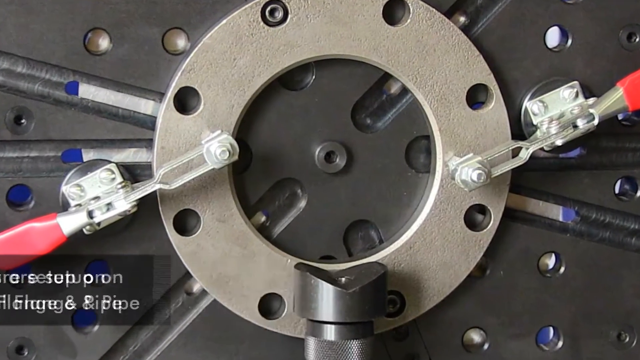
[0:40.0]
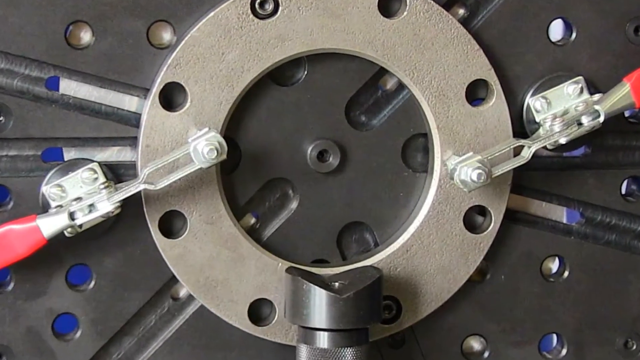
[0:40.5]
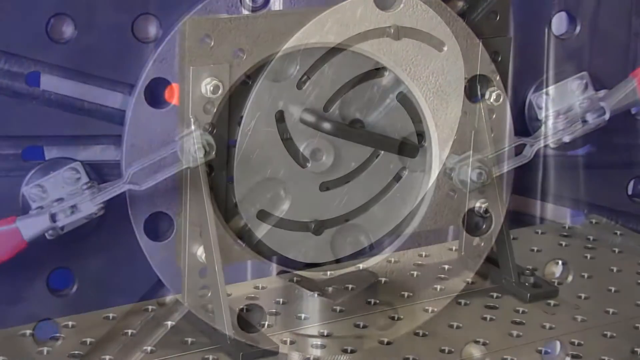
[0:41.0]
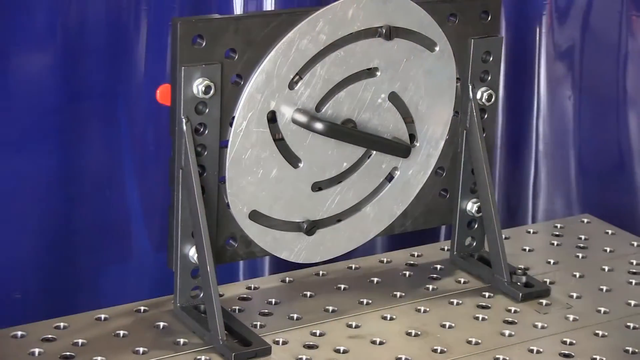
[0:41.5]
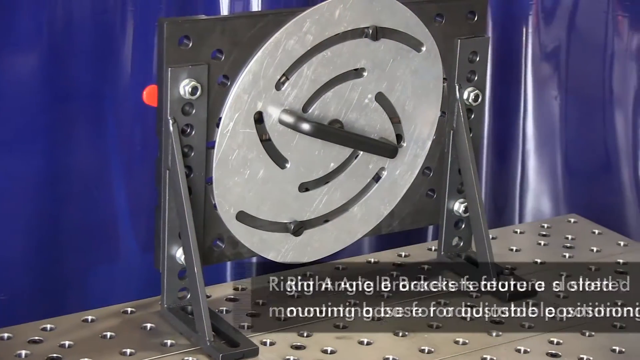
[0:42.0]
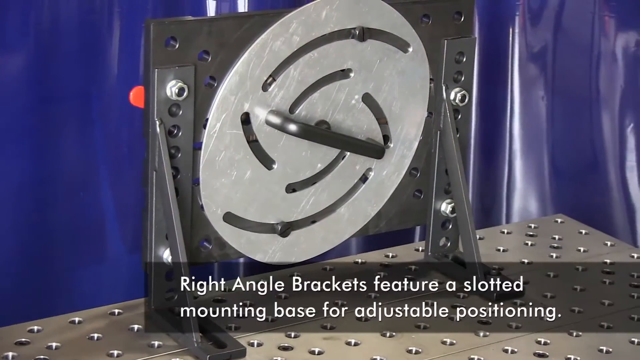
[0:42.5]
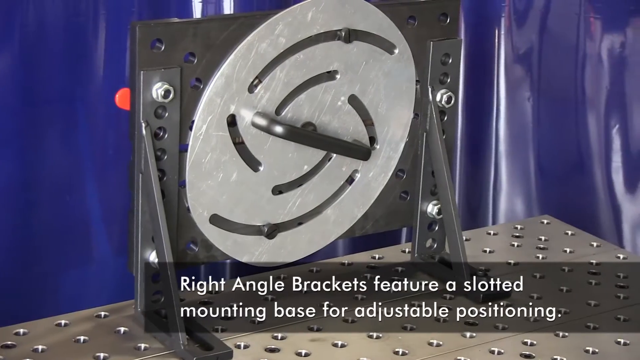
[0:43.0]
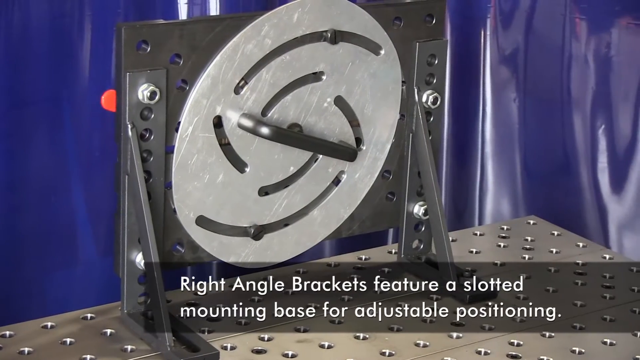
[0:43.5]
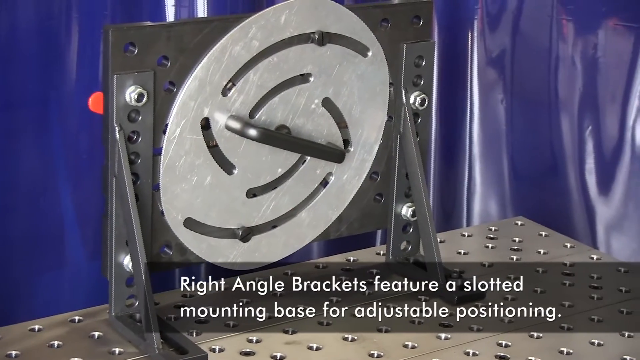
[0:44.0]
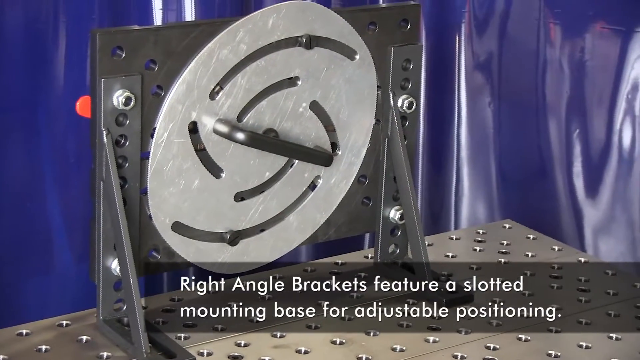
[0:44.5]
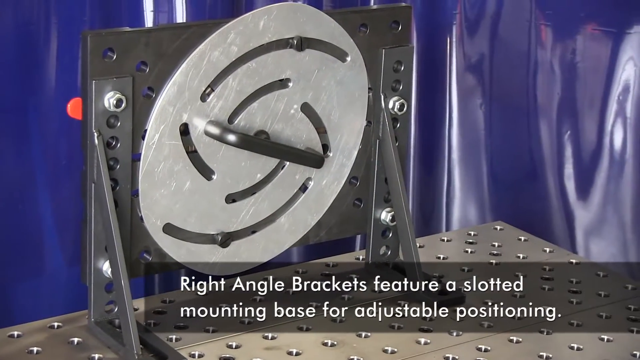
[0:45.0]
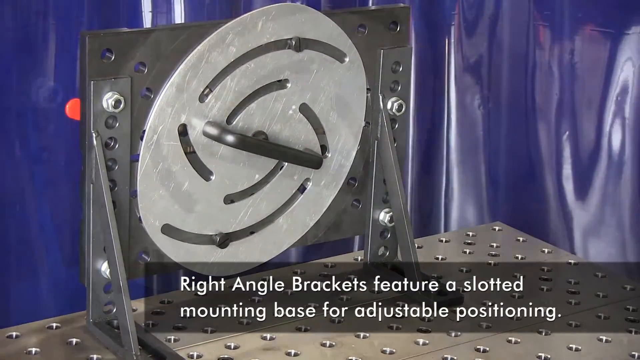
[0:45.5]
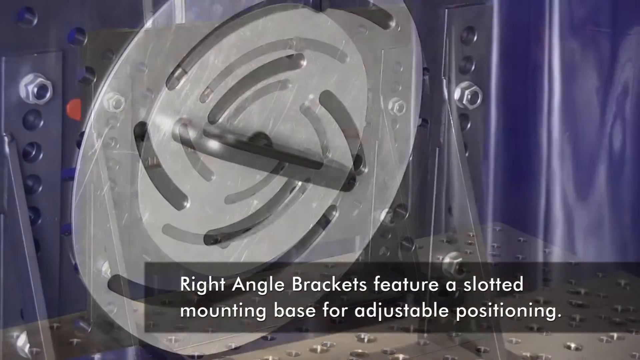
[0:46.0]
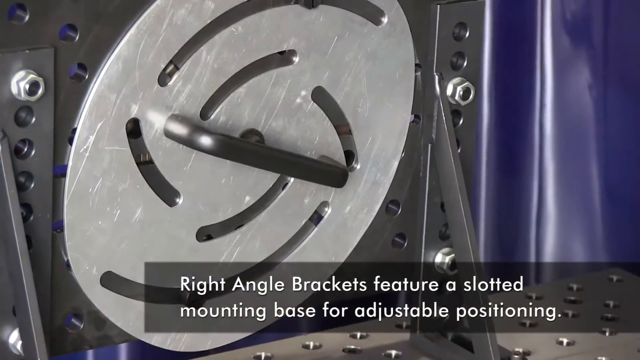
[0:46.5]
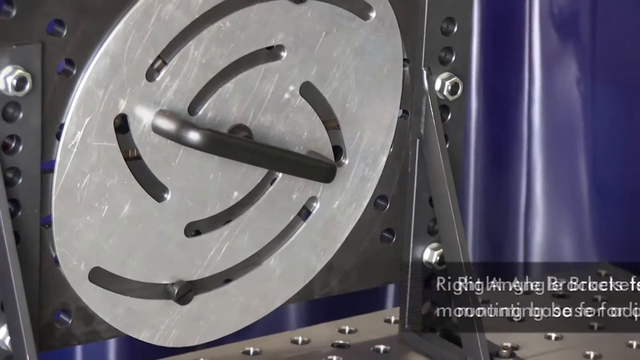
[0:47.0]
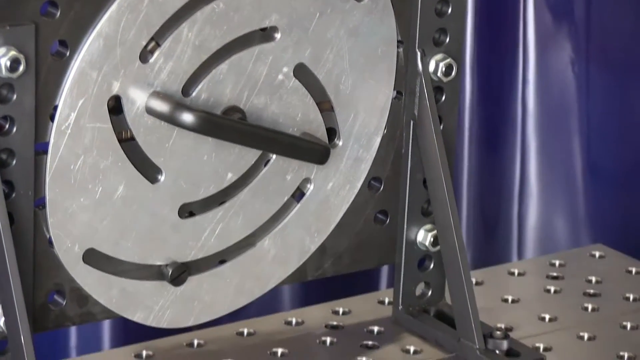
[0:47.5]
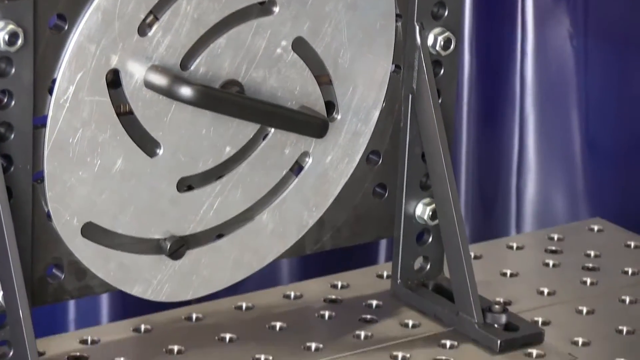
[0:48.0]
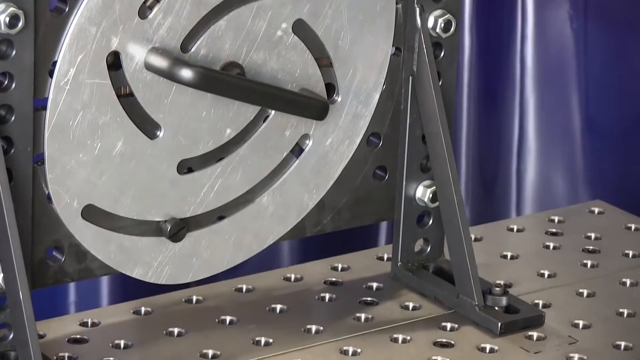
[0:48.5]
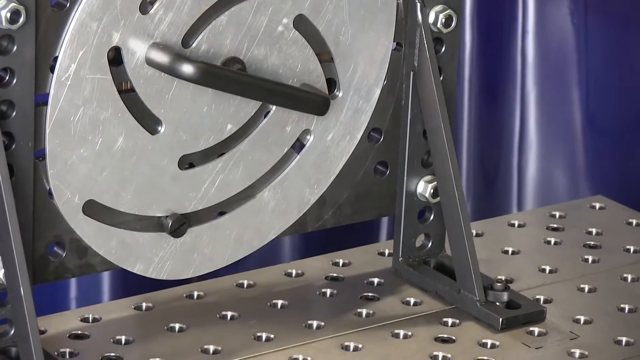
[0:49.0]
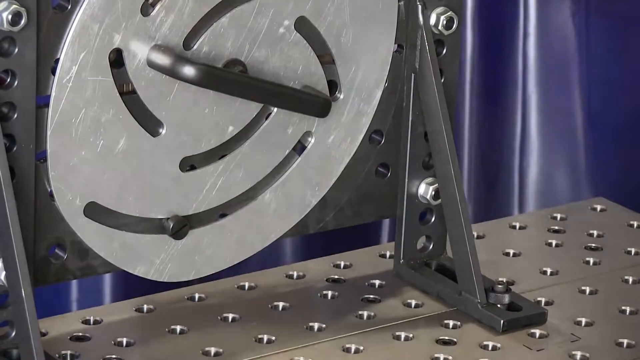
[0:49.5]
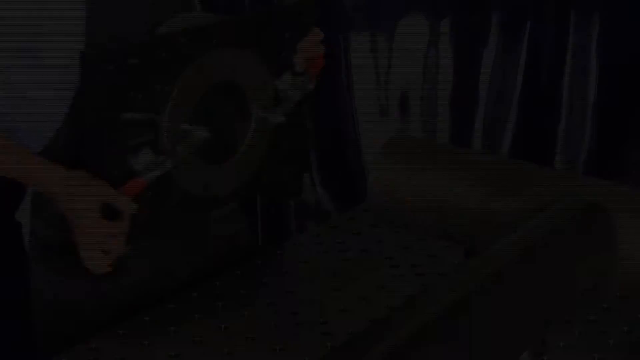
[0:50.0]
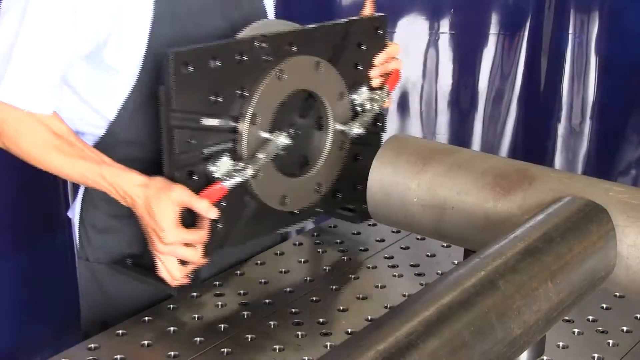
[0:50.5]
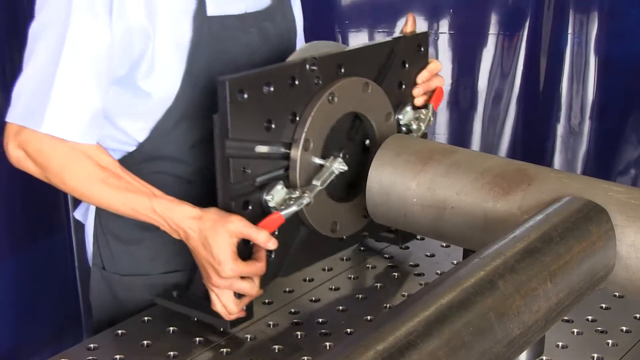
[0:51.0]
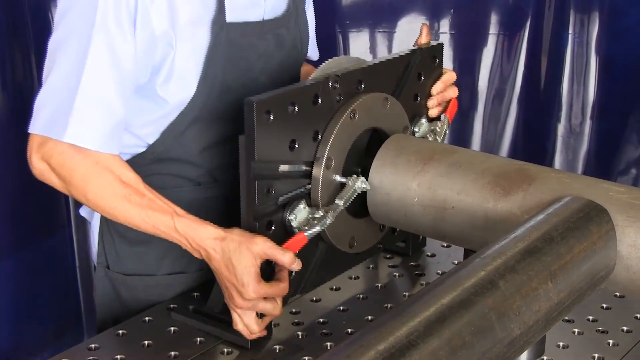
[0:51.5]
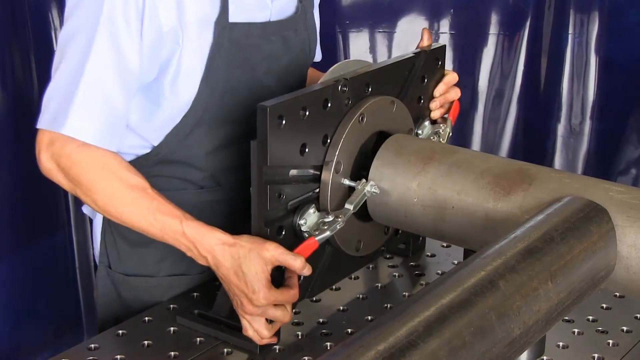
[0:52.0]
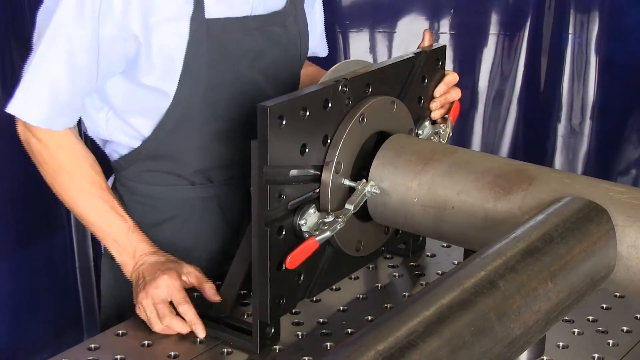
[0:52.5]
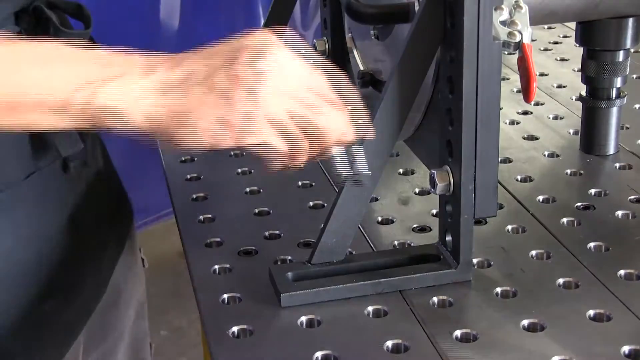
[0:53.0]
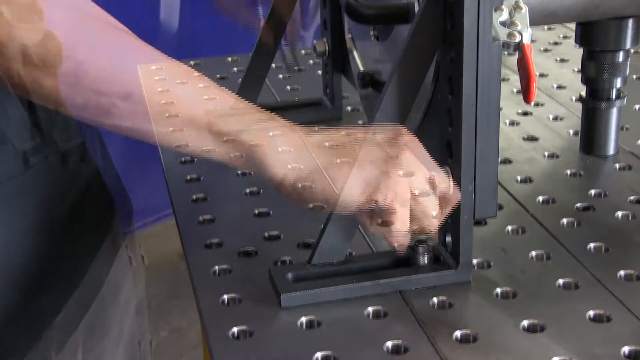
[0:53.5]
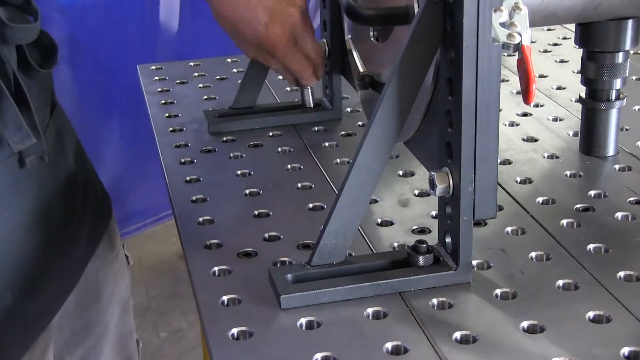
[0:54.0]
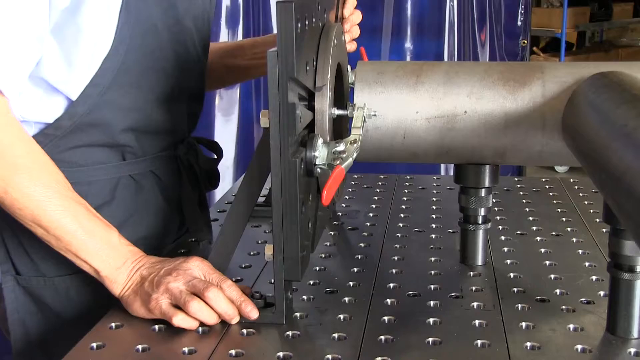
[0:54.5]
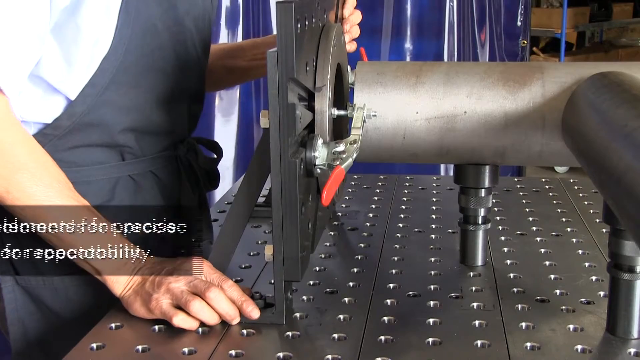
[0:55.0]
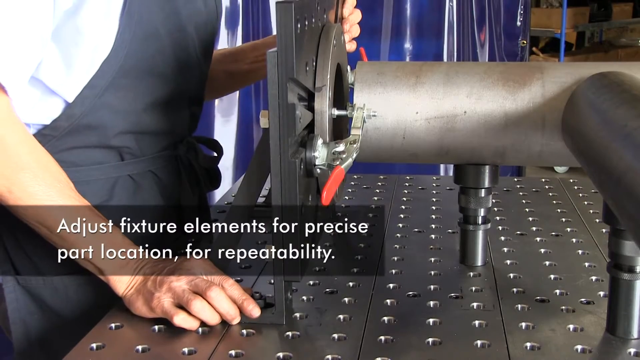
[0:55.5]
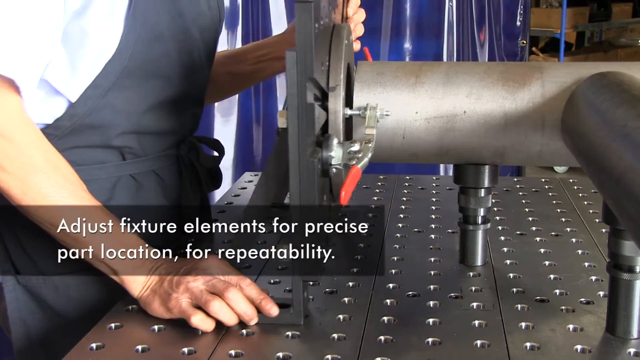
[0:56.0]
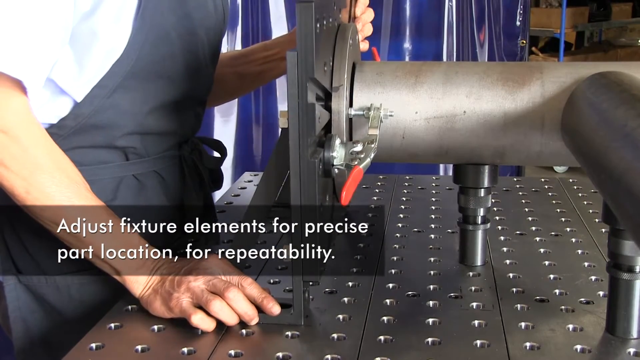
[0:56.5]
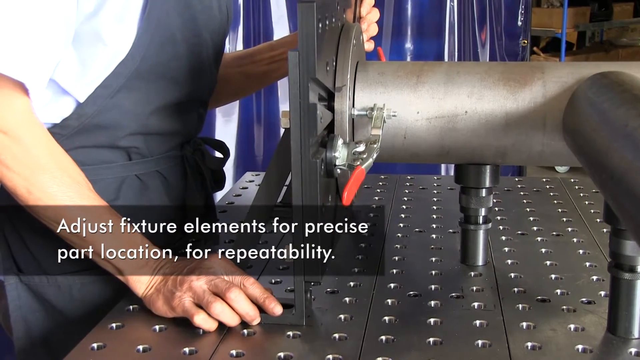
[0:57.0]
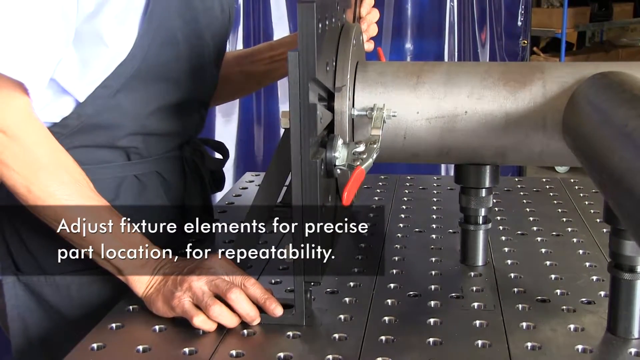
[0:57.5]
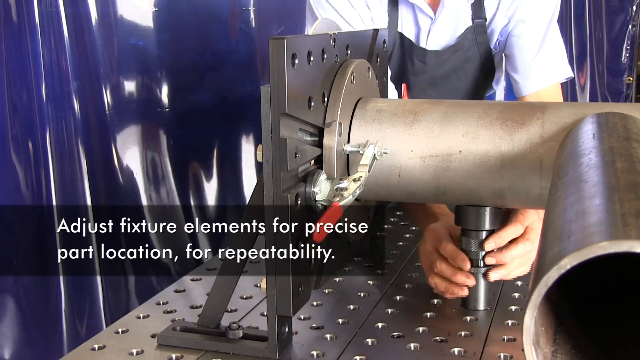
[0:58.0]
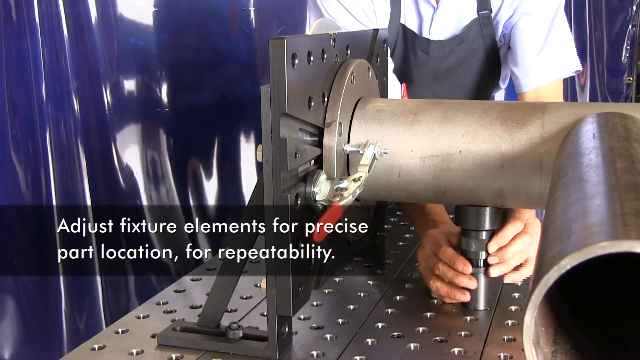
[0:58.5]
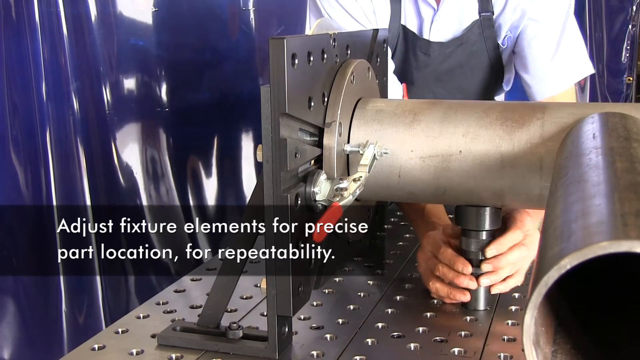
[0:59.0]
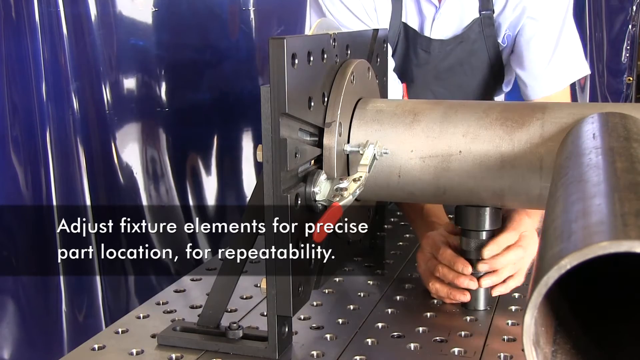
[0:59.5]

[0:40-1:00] A very large circle is shown, with text reading "right angle brackets feature a slotted mounting base for adjustable positioning." The circle is attached to a metal base that looks like it has the same circles as the table. It is placed on a wall attached to two supports, lug nuts hold everything together, and it has a handle. It is attached to the original pipe. Text reads "adjust fixture elements for precise part location for repeatability." The person places the round circle on the end of the pipe and fixes the supports holding the circle into the table. They then adjust by screwing a very small, thin pipe in the middle to the table.